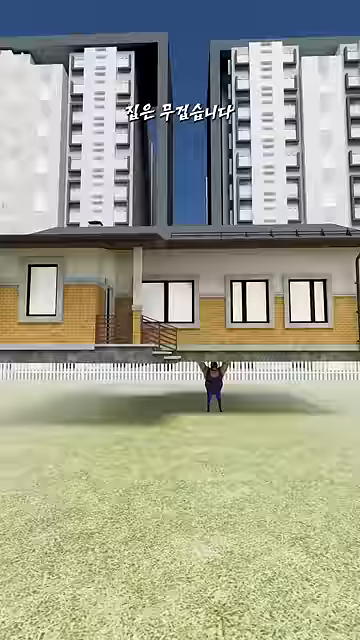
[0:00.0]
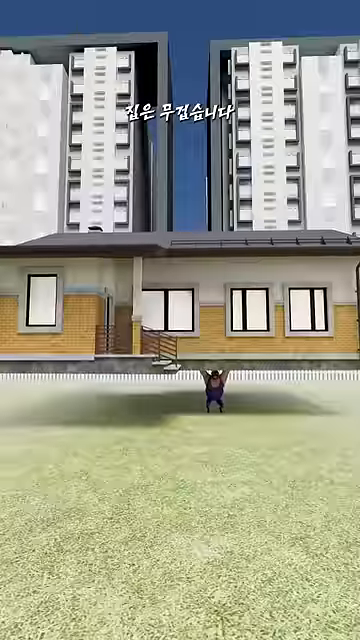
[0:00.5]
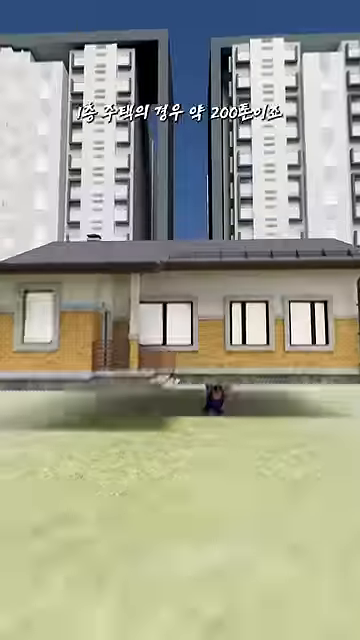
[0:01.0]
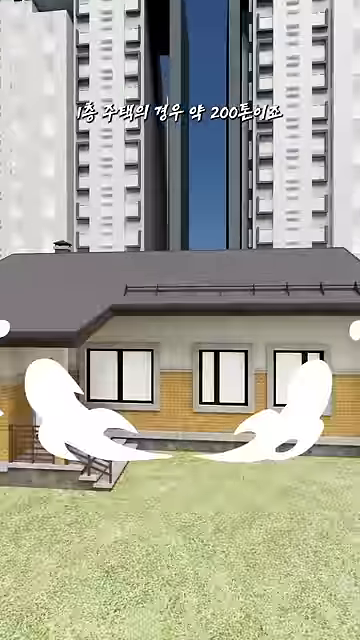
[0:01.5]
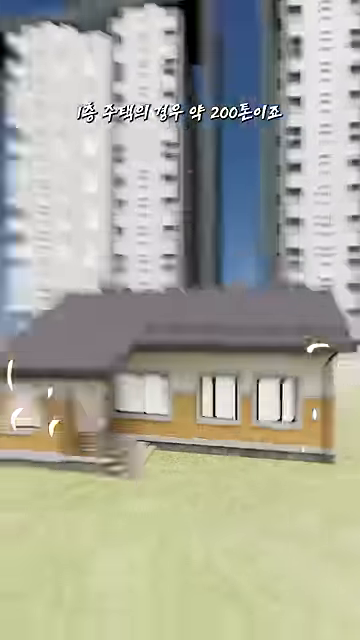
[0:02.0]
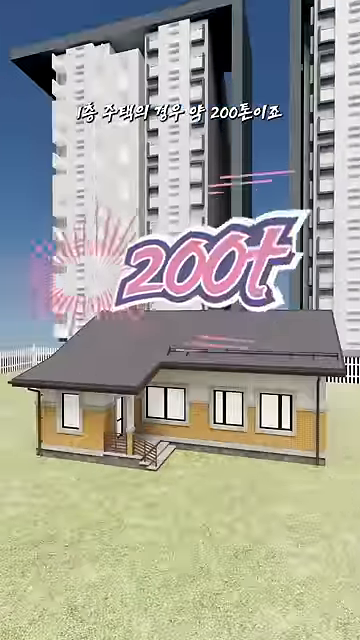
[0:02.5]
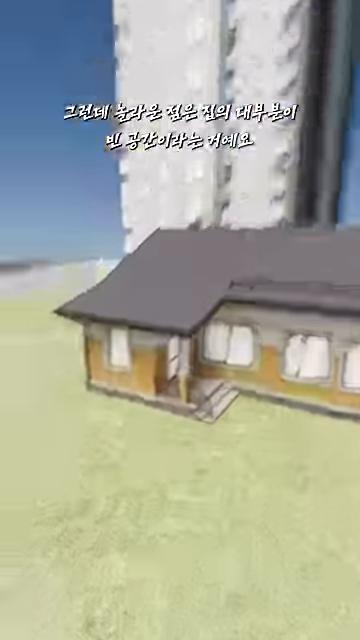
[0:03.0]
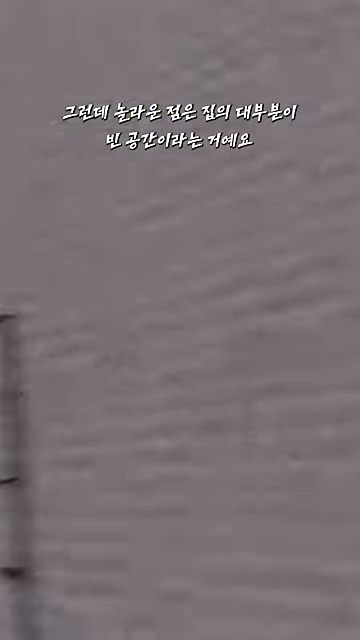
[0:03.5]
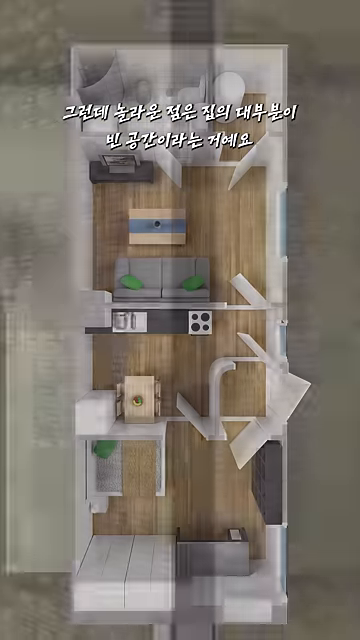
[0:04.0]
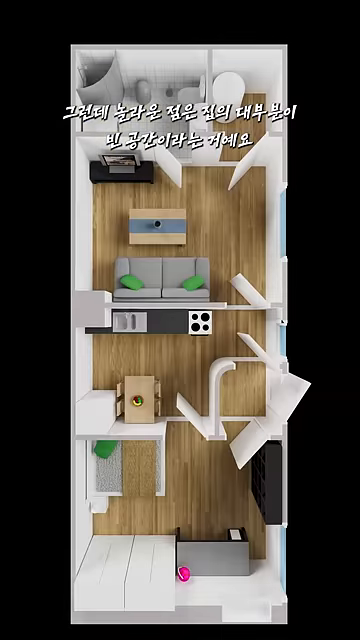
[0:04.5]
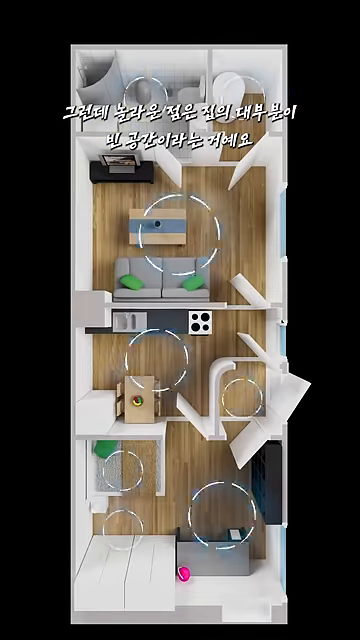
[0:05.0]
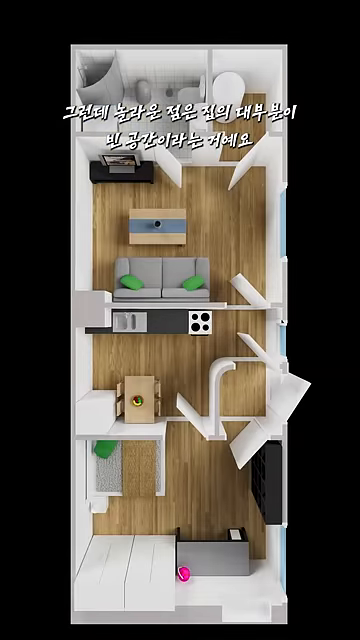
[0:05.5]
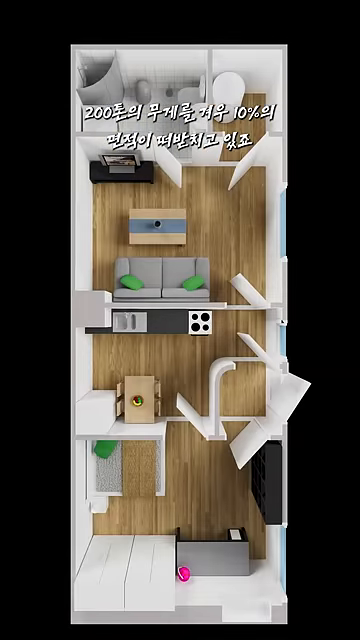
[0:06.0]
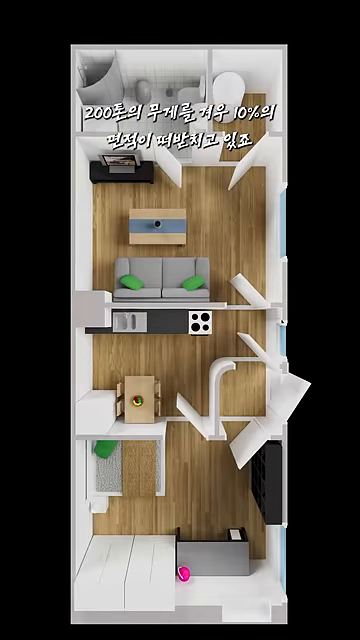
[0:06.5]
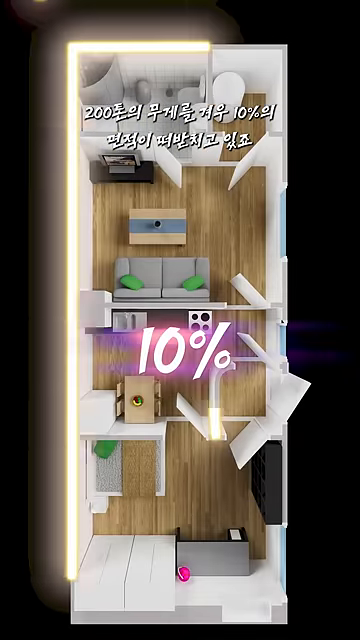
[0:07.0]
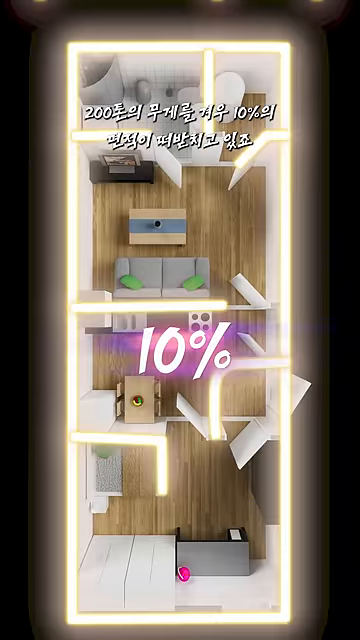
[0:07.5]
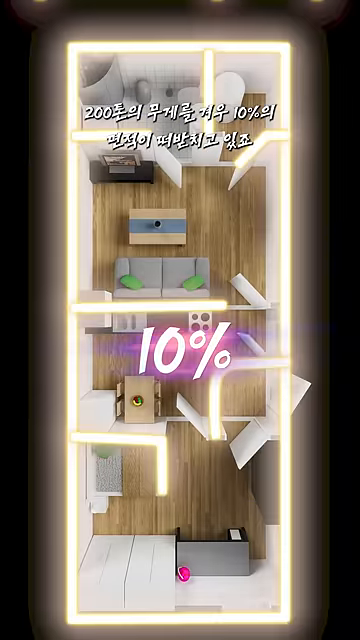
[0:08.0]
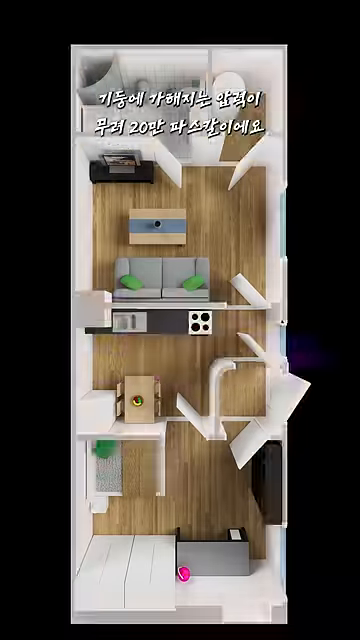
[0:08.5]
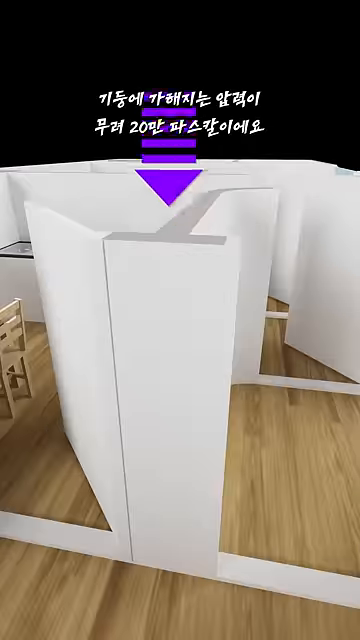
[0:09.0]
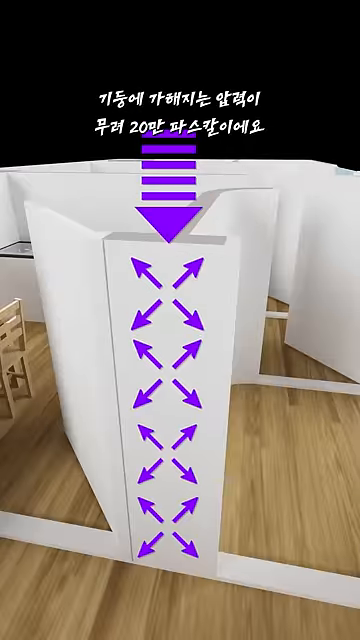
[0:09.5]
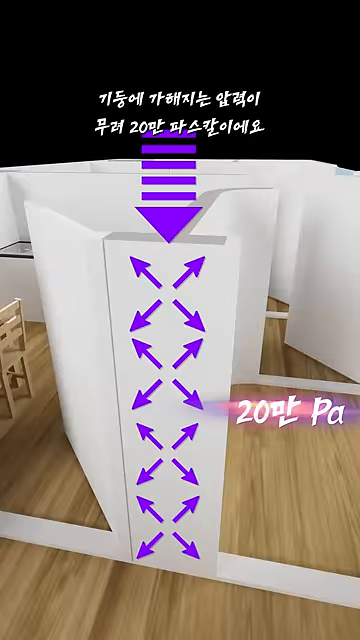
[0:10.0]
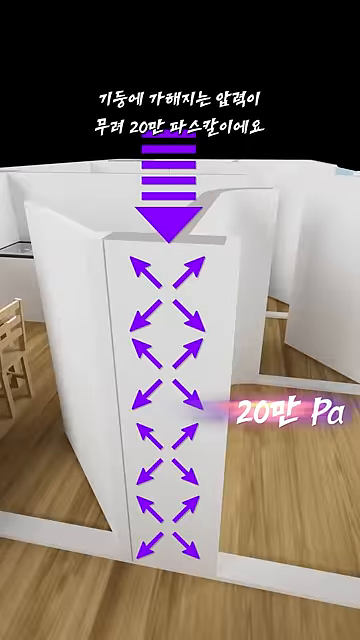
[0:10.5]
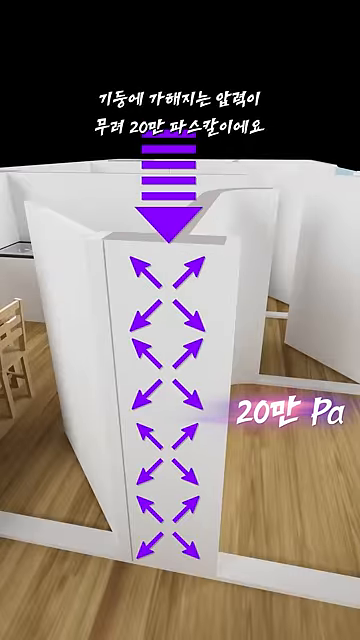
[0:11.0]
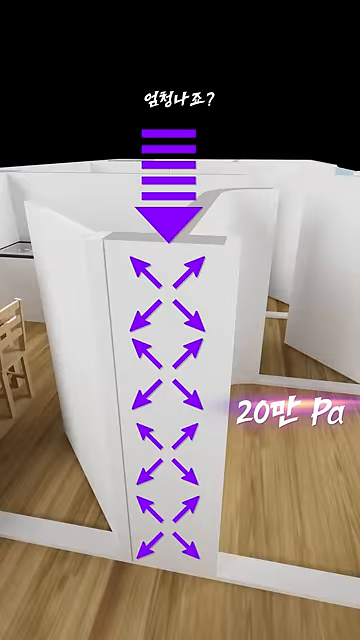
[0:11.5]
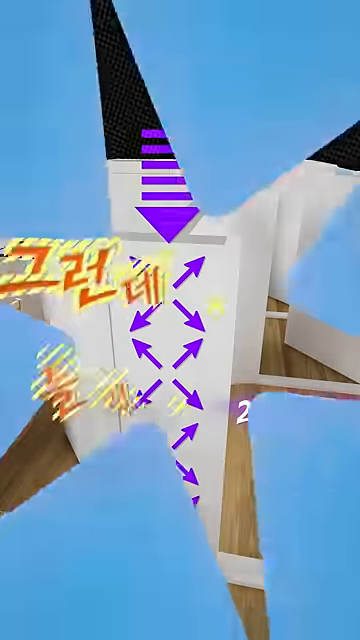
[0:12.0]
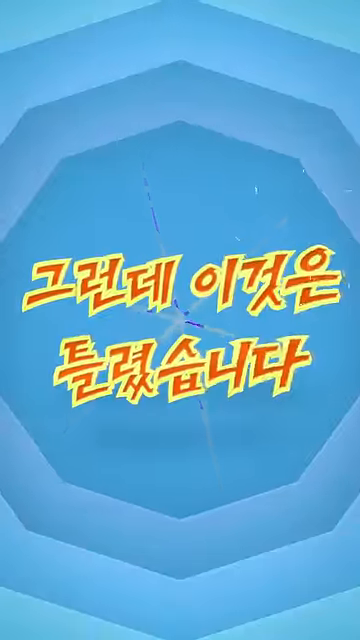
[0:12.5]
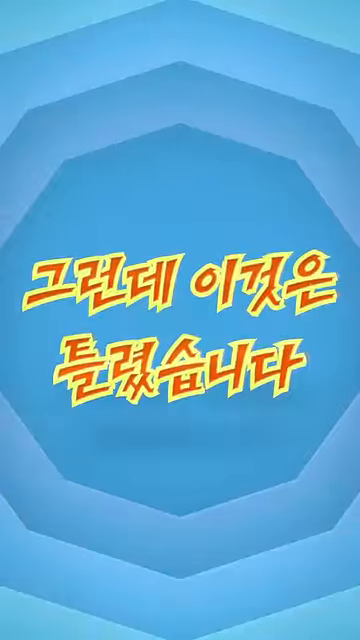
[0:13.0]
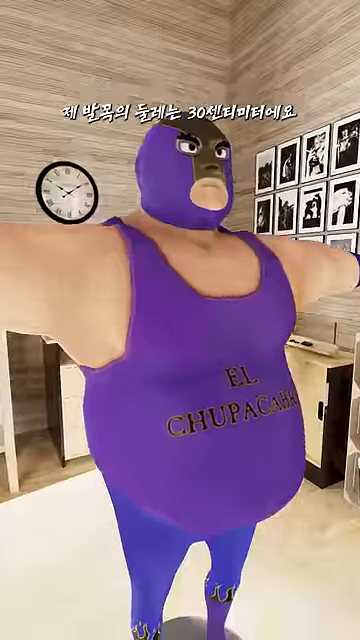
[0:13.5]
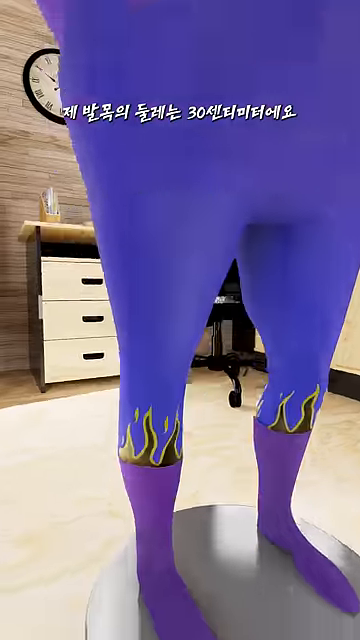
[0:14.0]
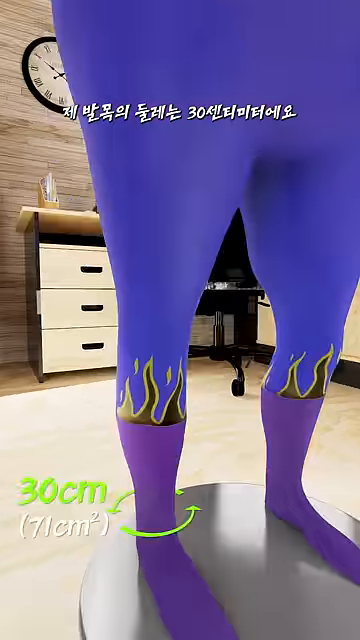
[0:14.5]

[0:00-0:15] An animation opens with a man seemingly trying to hold up a house before it crushes him and he plops down, while various text flashes across the screen, apparently signifying how large the house is. The view switches to a top-down view of the house, panning within it to show the various rooms, with spots highlighted by flashes of light, a 10% figure, and purple arrows displayed along the wall. It then cuts to the man, in a purple wrestler's outfit, in a T-pose while his ankle is highlighted; he is standing inside one of the rooms, which looks to be an office. The entire video is animated with no real humans, and the only human-like figure is the man in the purple wrestling outfit.